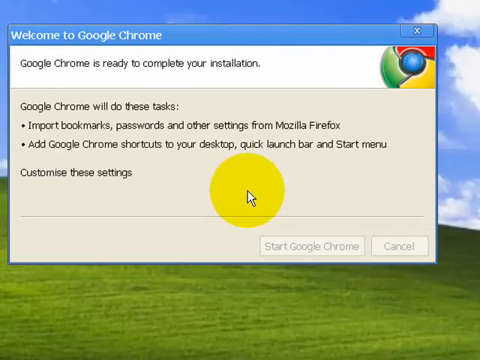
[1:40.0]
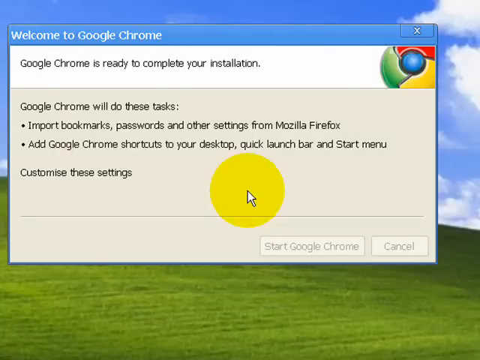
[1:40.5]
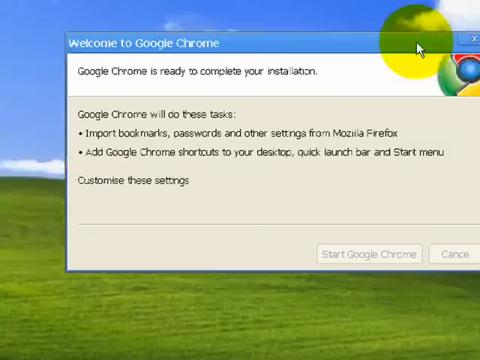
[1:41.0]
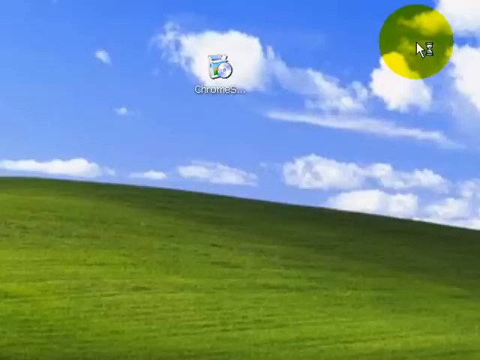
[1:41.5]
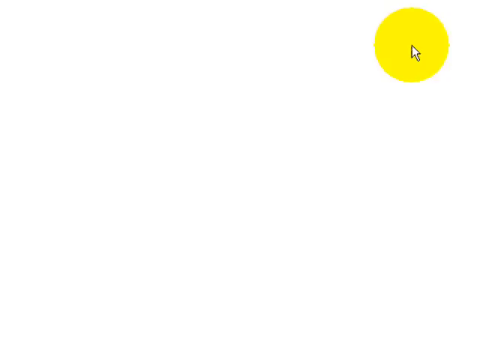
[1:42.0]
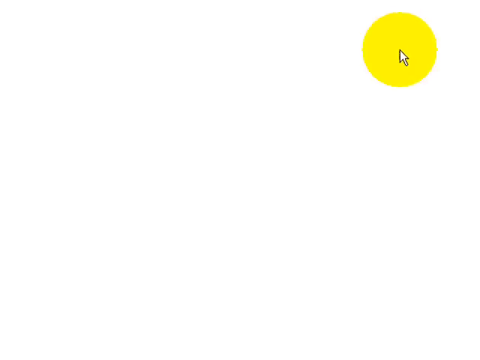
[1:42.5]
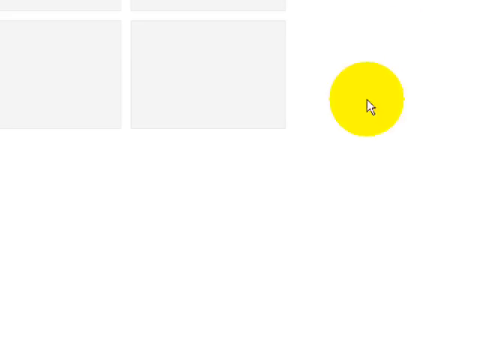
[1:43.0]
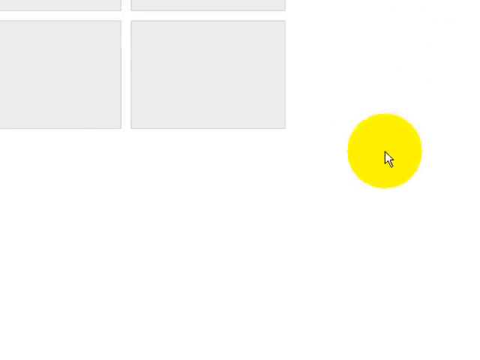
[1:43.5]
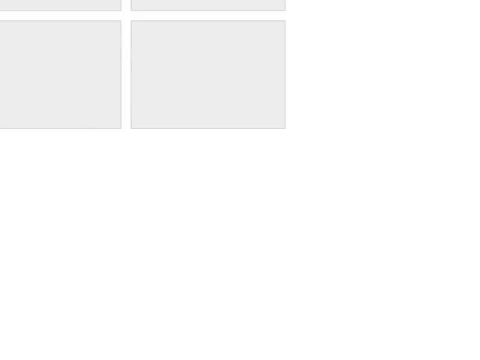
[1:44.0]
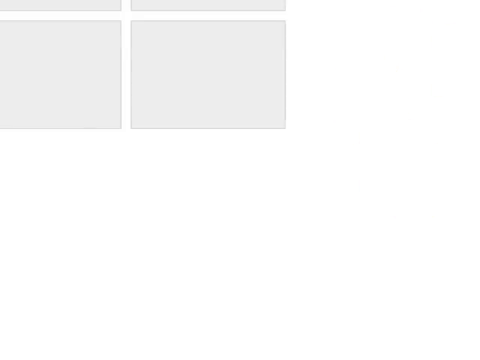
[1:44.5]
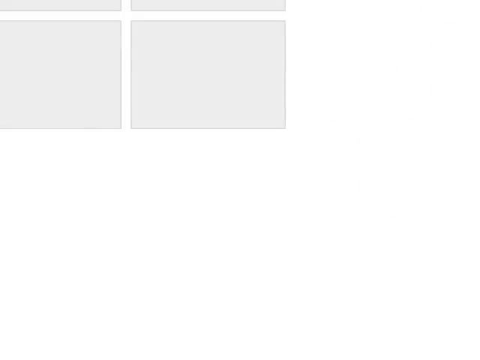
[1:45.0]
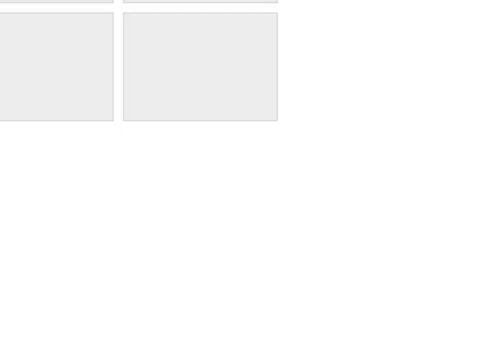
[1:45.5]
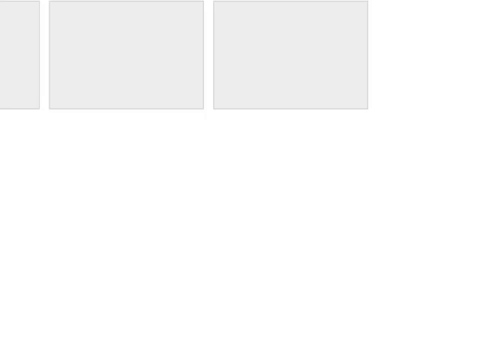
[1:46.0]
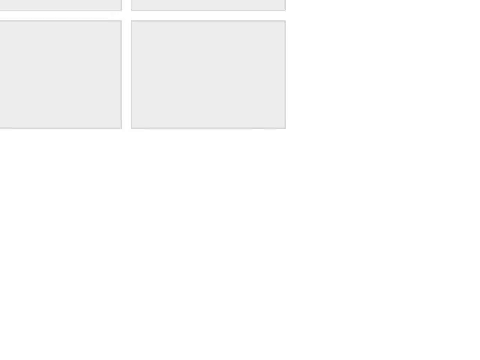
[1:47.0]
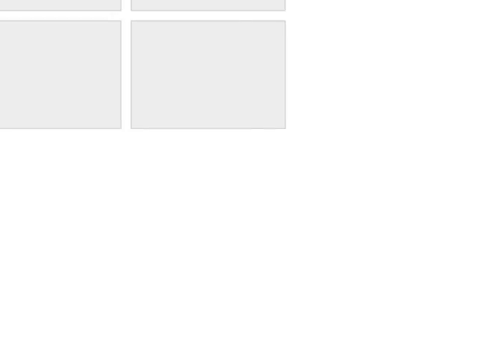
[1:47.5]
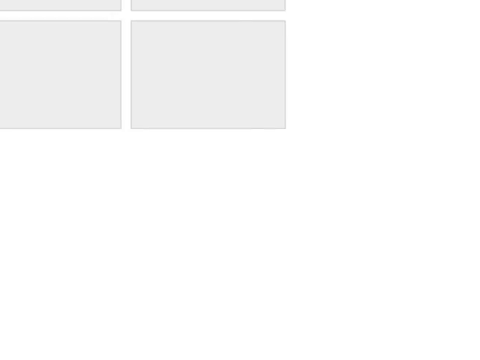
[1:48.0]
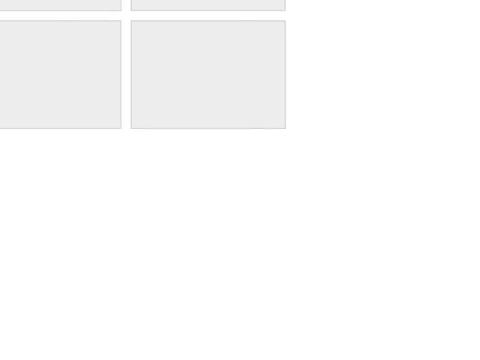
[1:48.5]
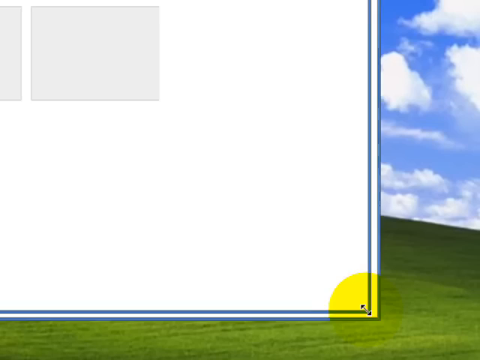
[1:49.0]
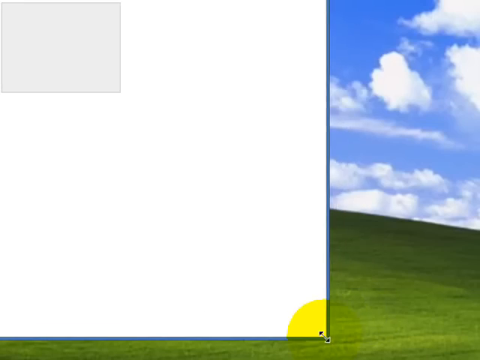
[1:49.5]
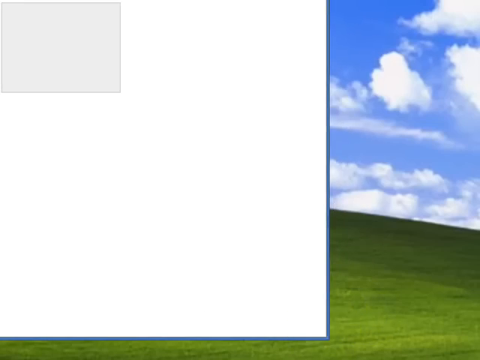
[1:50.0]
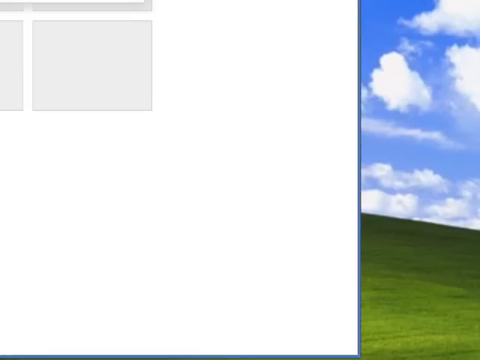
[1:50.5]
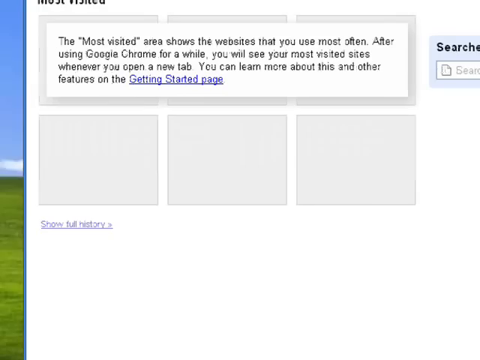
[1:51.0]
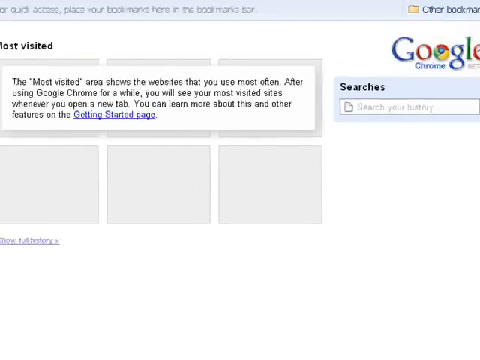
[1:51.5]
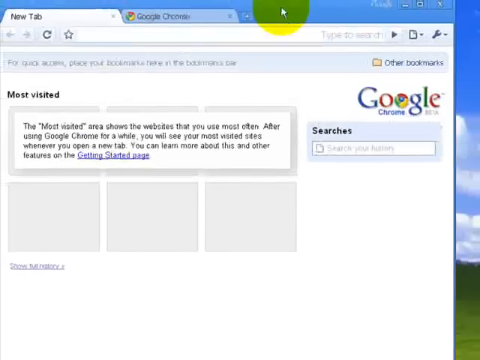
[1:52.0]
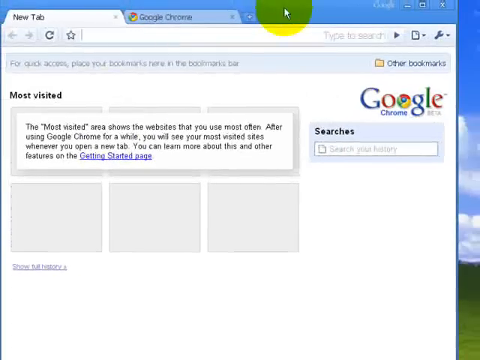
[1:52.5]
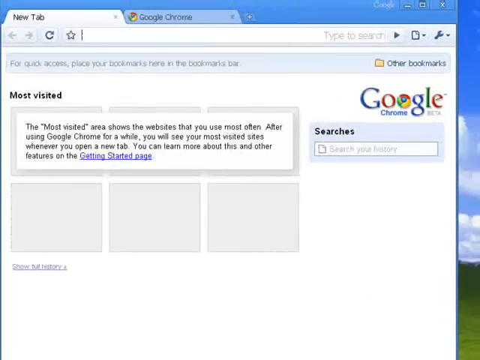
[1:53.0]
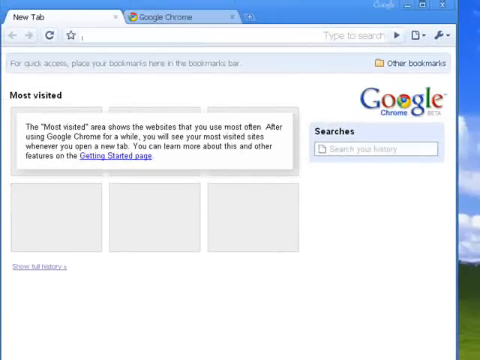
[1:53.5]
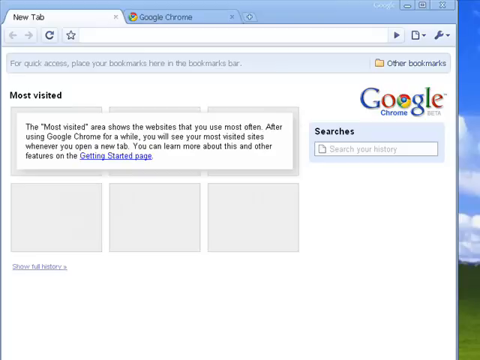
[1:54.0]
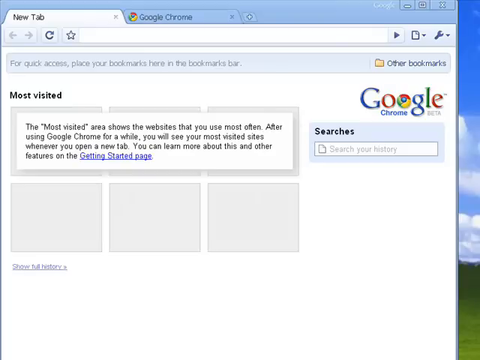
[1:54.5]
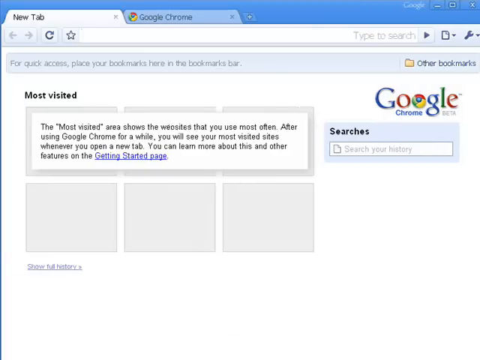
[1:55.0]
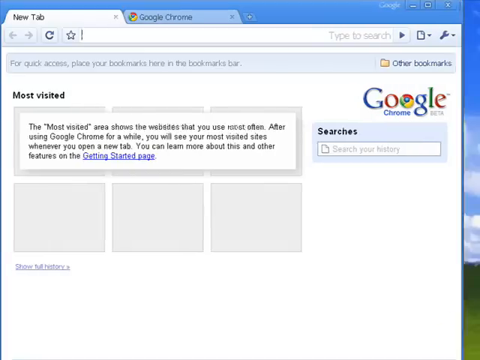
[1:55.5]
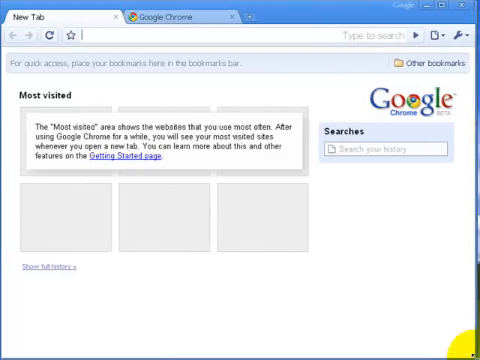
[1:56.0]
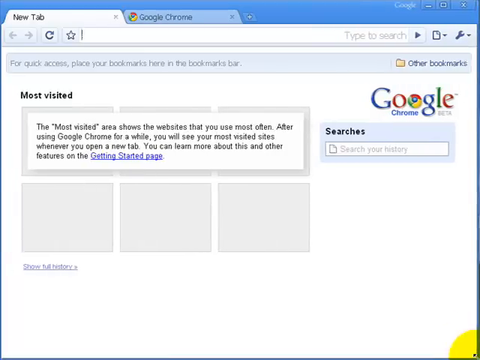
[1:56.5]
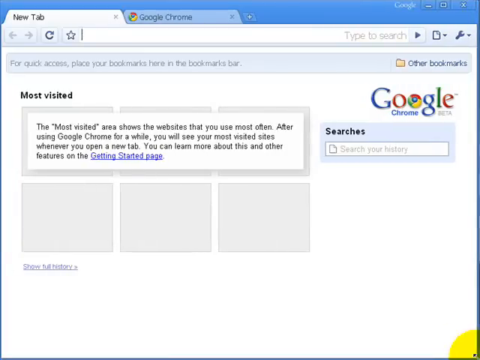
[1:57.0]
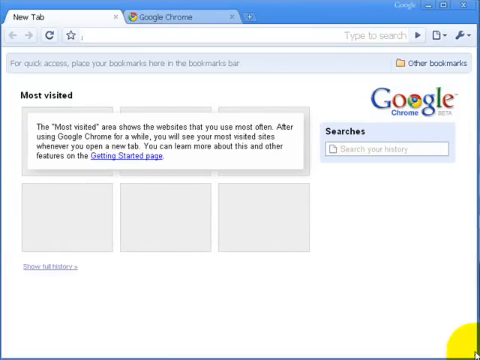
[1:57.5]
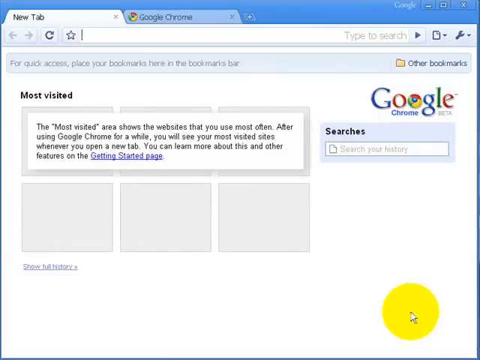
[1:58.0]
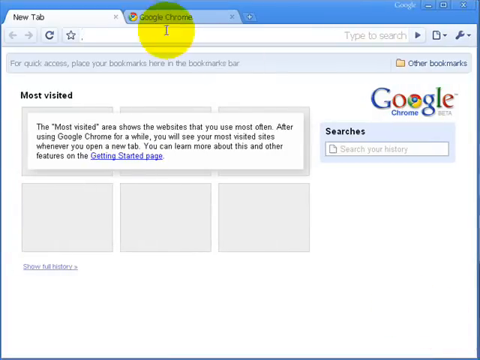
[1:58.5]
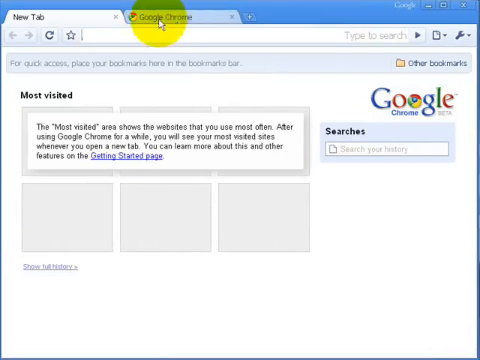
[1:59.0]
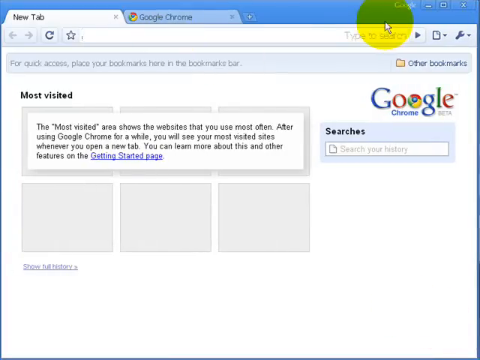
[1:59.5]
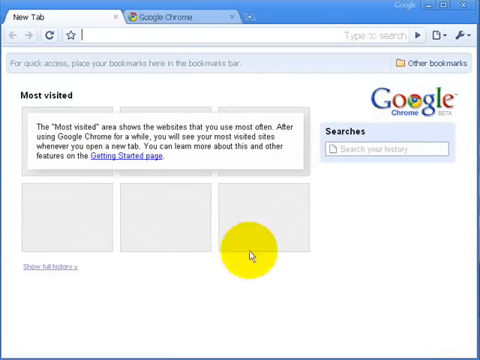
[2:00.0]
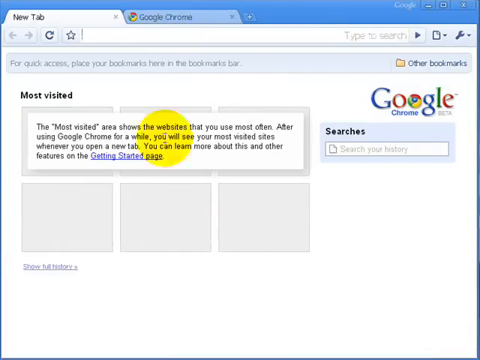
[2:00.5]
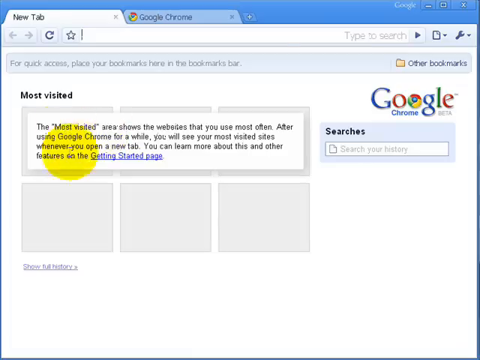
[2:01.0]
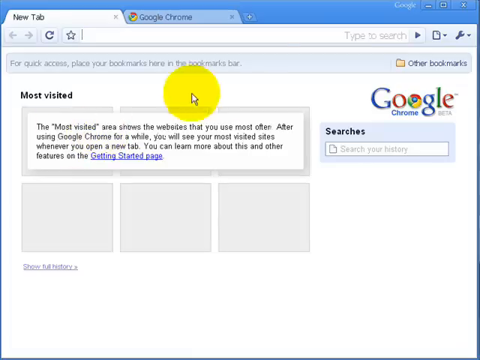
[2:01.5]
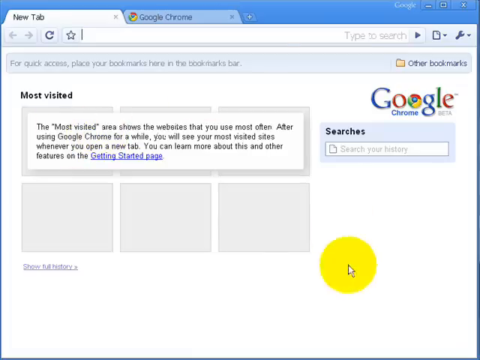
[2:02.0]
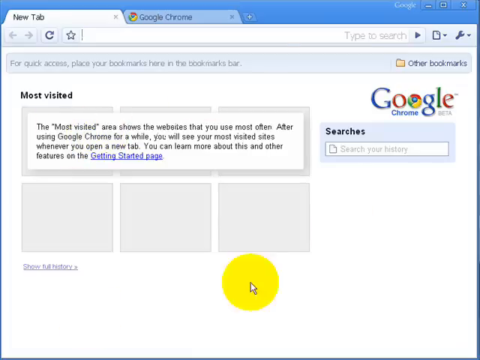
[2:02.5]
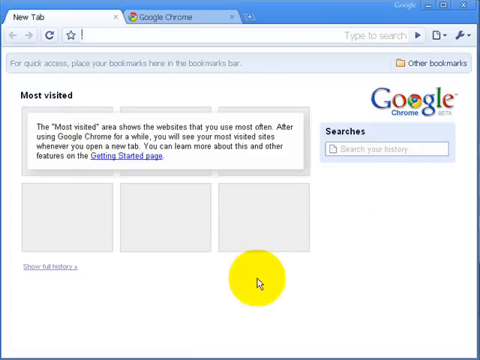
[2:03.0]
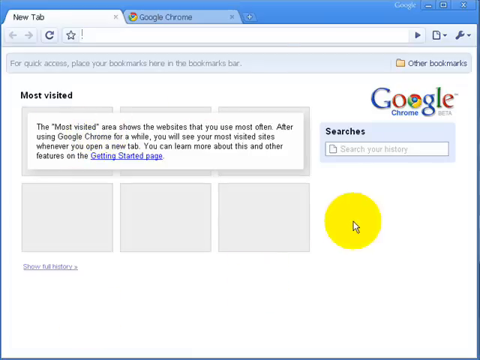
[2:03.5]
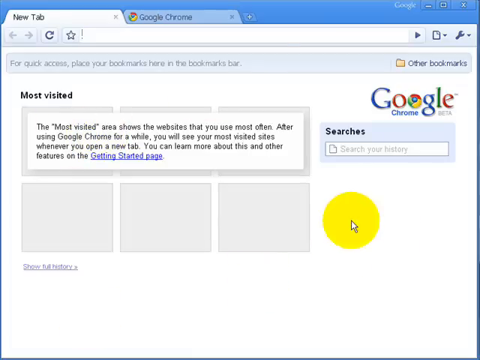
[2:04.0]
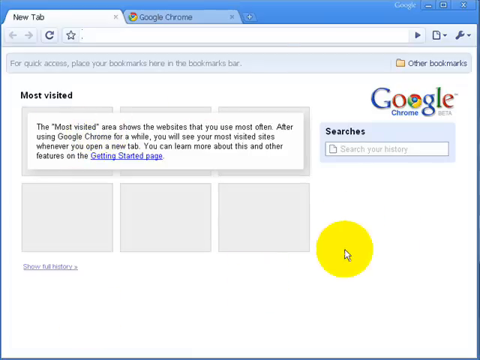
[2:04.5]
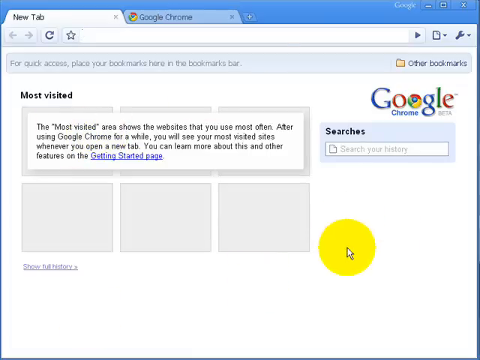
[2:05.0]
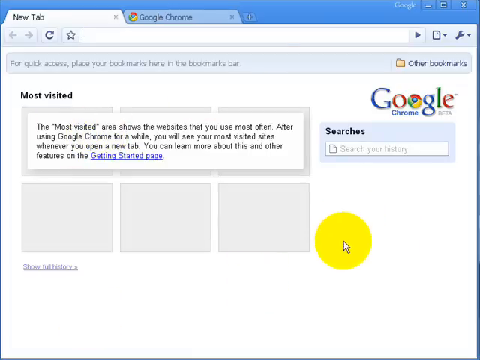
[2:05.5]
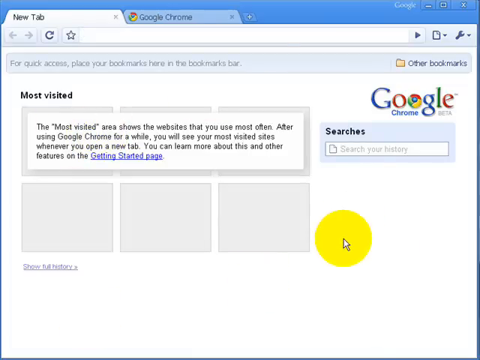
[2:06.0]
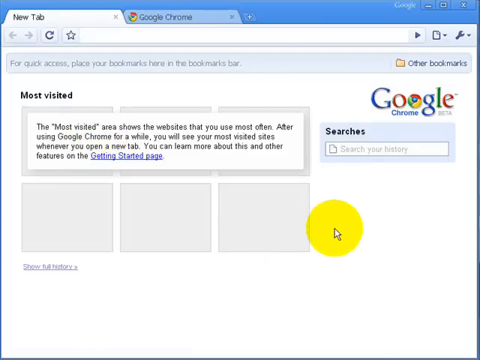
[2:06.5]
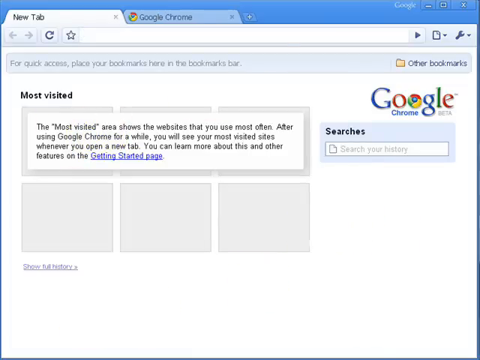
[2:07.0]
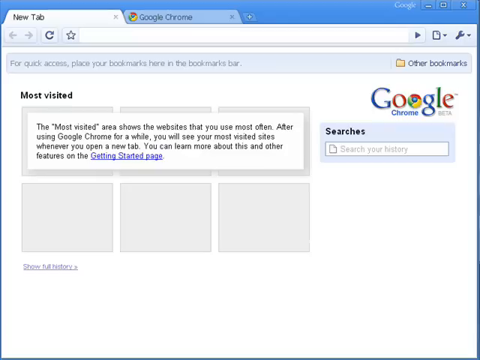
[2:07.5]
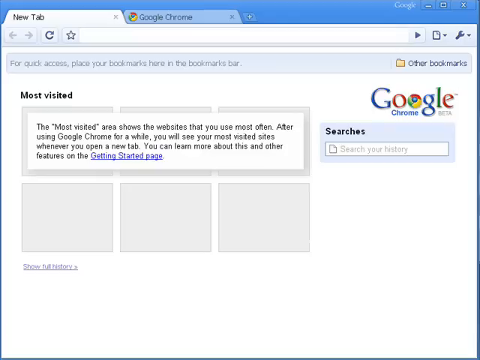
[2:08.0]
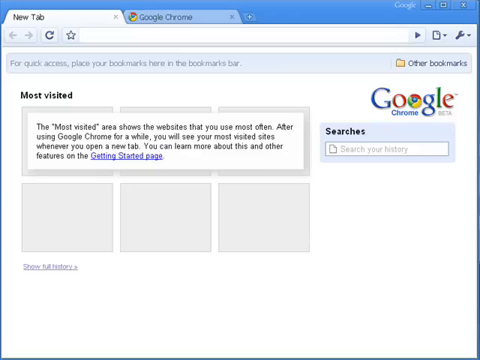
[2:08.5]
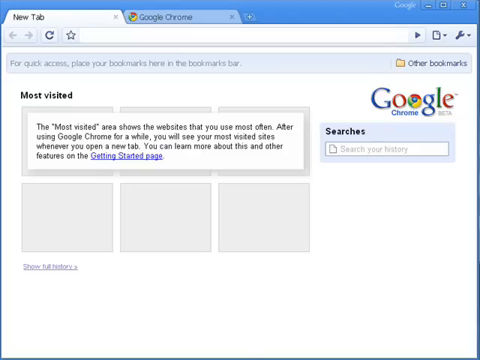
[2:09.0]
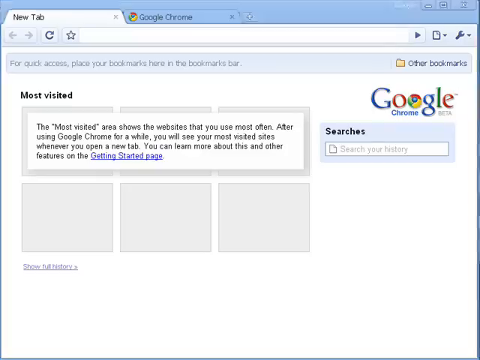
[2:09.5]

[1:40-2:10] A Chrome pop-up window reads "Google Chrome is ready to complete your installation," and the installation then completes. The mouse pointer, with a yellow circle around it that makes it highly visible, drags the Google Chrome browser window around the screen until it is set to the desired proportions, then moves all around the browser window. The newly installed browser has two tabs open: the new tab on the left, and a tab to the right, not opened, titled "Google Chrome." Below that, the page has a most visited area, which shows no sites since the browser has just been installed.